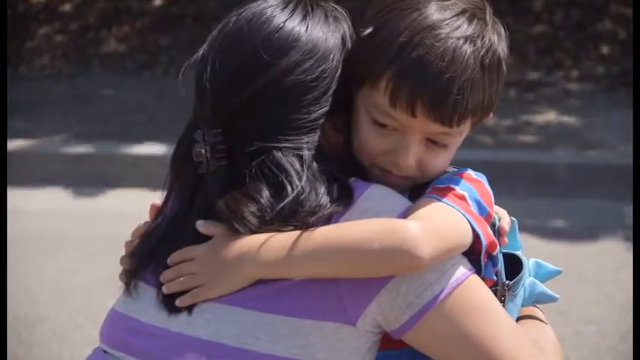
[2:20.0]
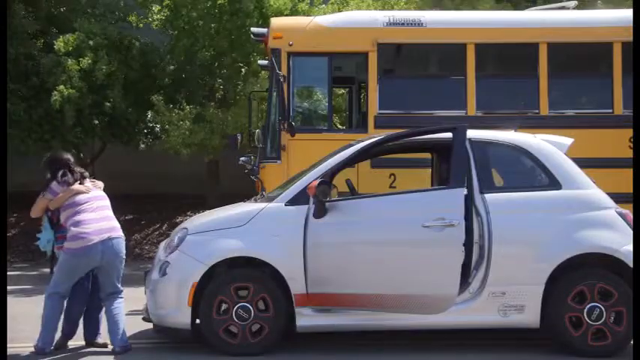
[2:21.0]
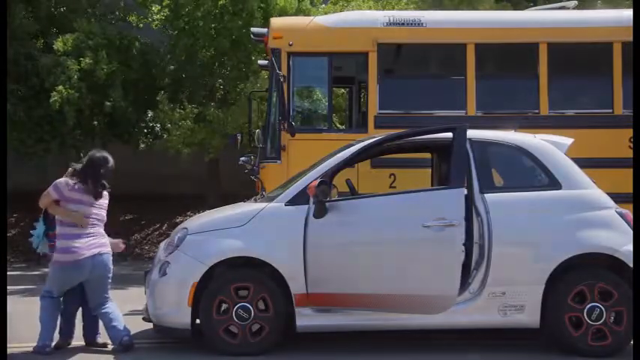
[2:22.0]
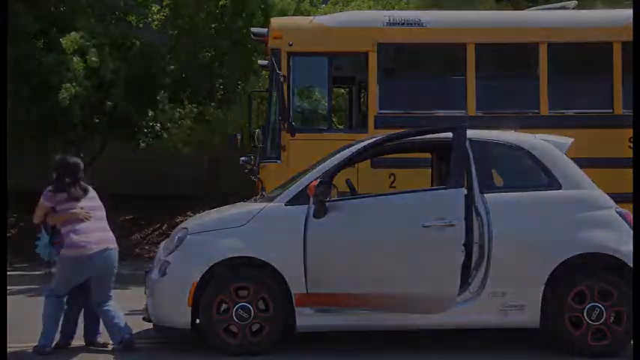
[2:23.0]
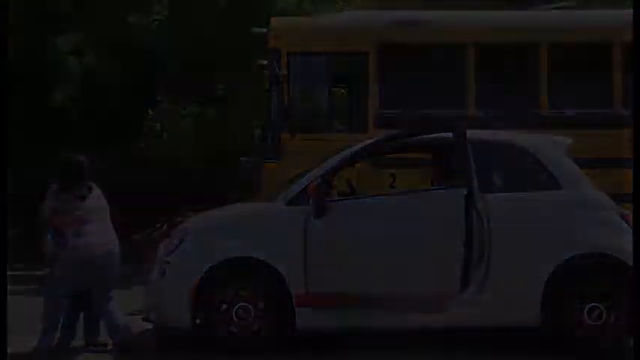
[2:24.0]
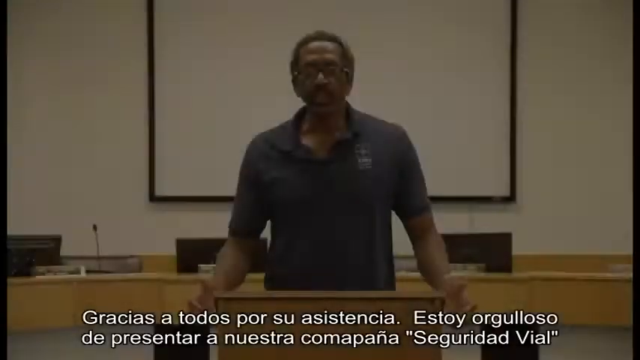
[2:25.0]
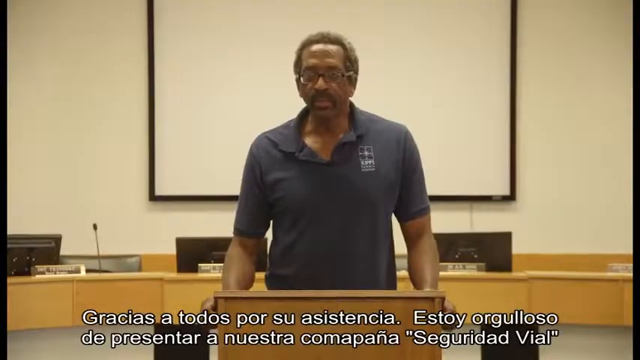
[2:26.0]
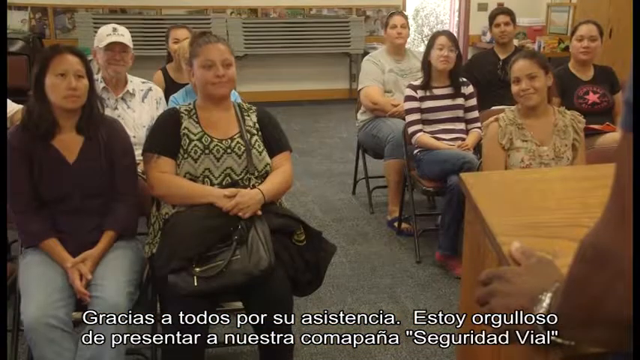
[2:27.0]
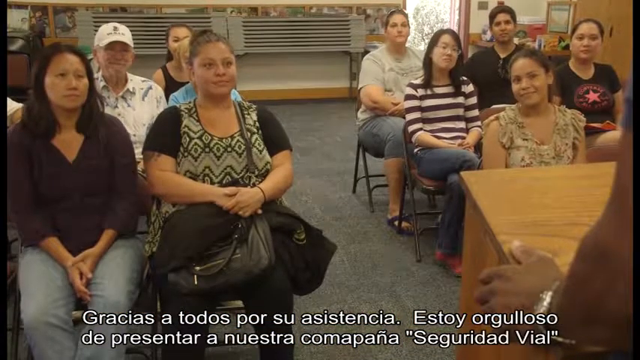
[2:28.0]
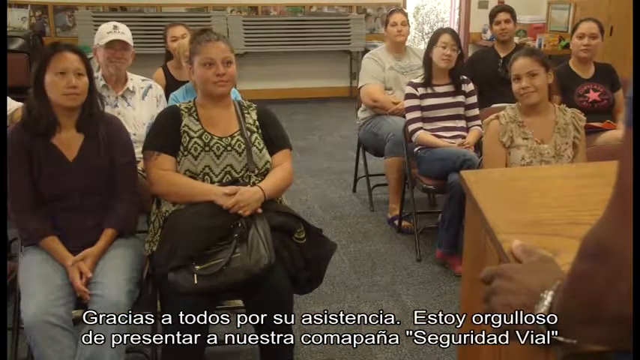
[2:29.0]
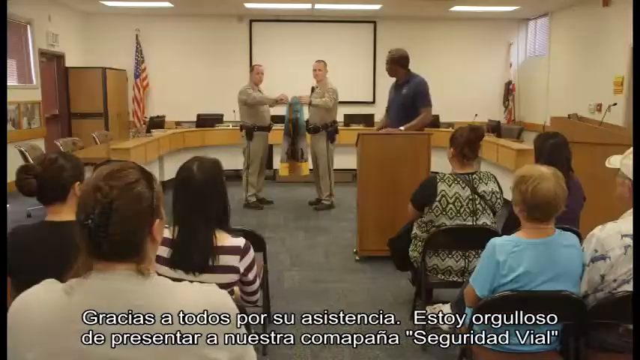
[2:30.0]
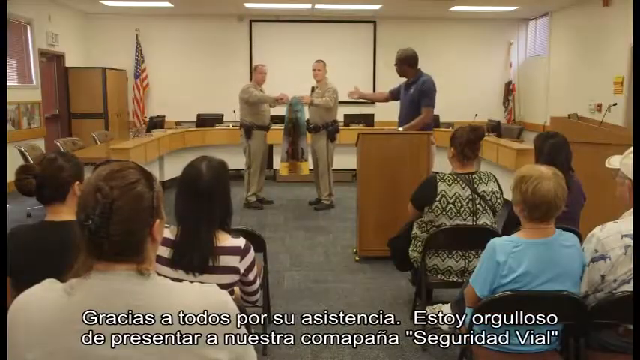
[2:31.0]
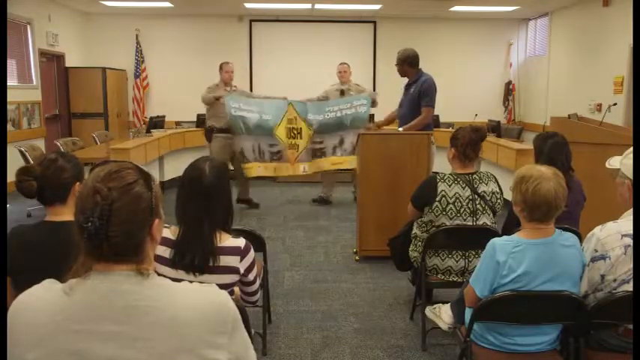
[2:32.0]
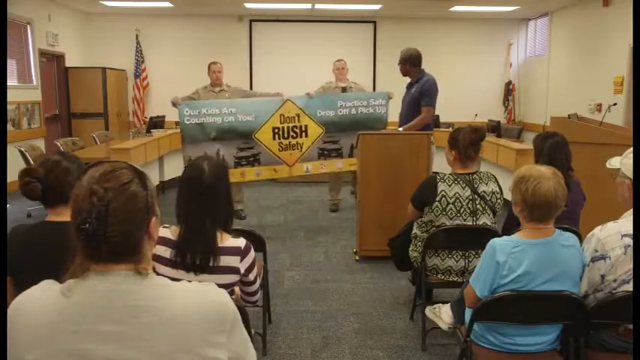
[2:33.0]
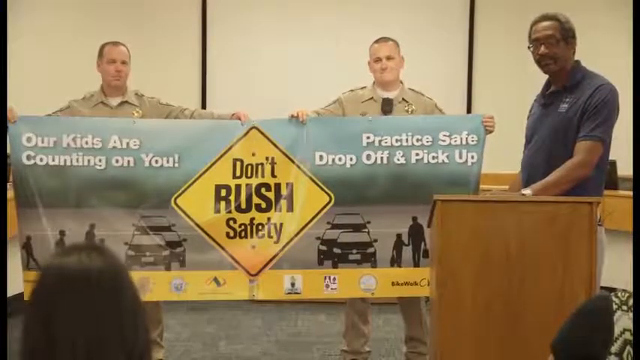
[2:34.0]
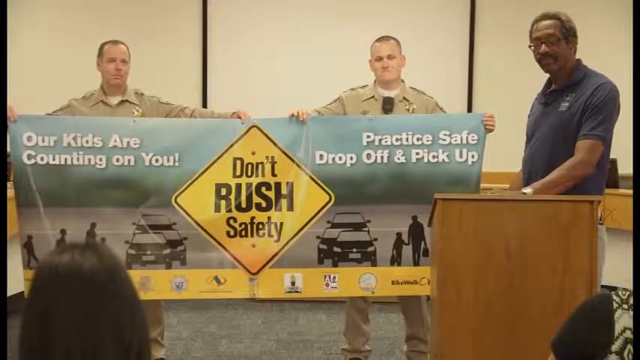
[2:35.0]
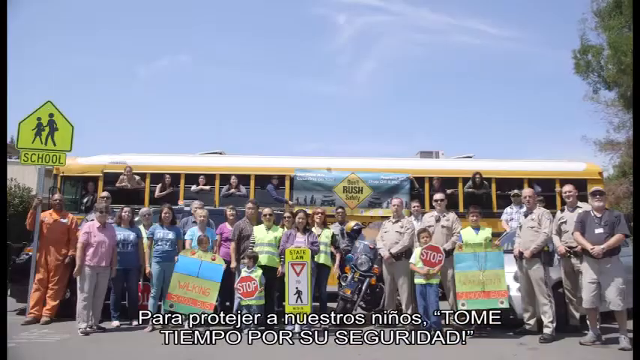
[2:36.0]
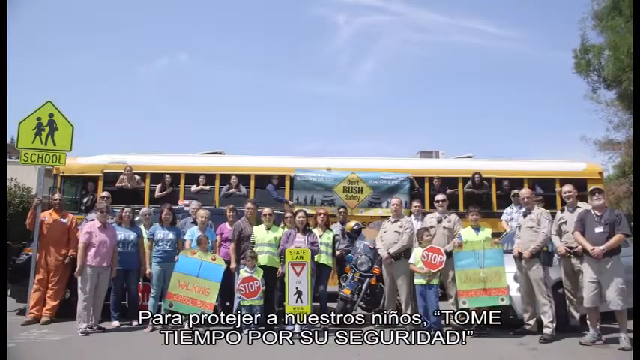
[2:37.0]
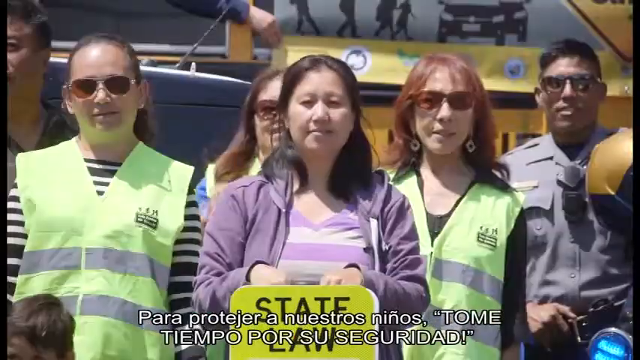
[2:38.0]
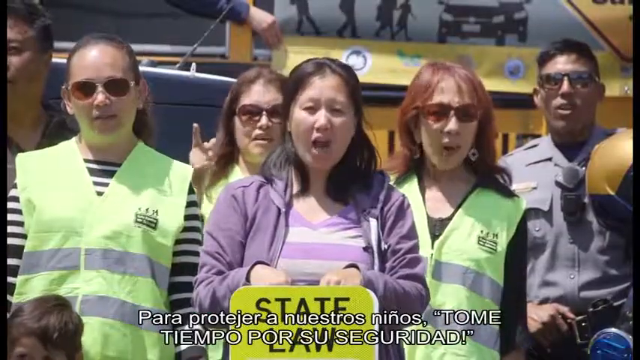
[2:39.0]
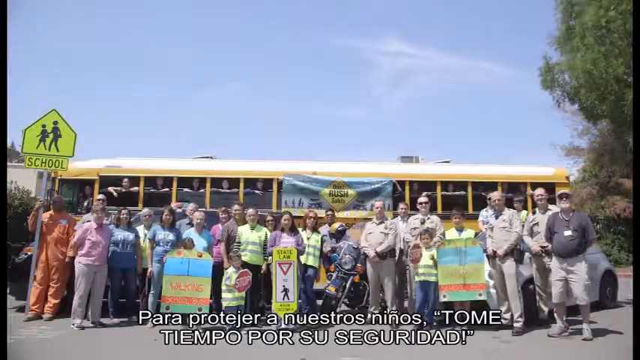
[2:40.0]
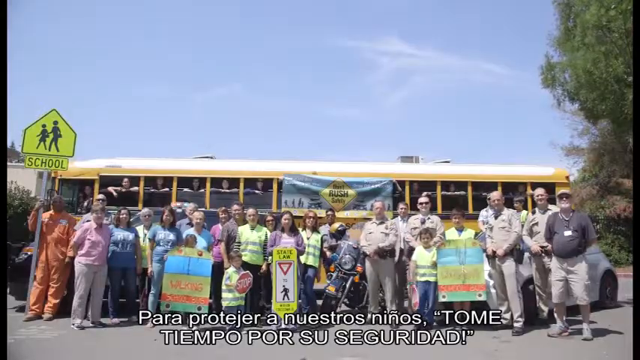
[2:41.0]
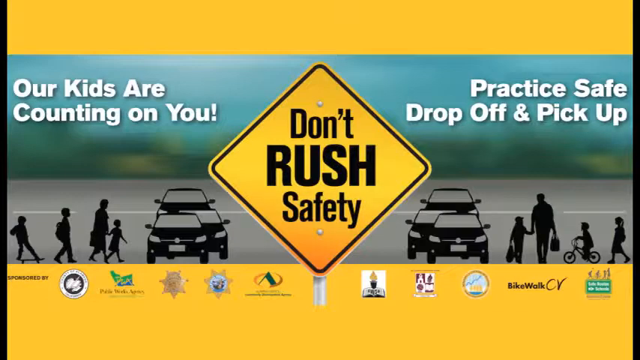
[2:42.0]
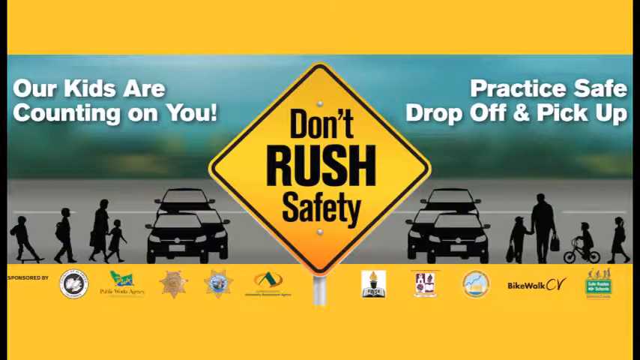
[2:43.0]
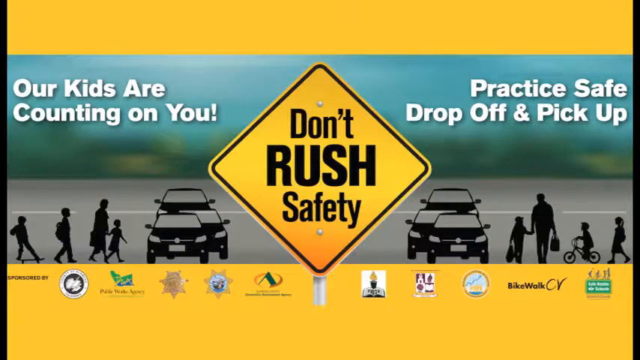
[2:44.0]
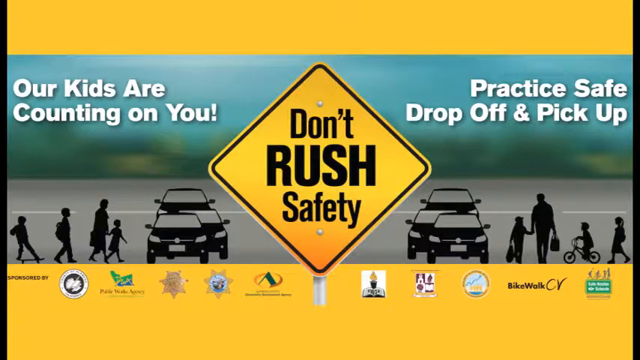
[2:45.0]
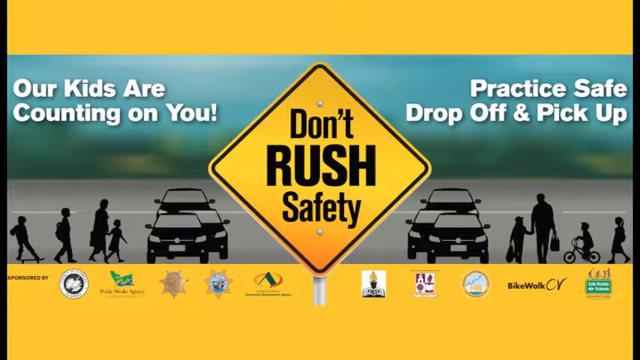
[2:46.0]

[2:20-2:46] The video returns to the adults in the meeting, which appears to be about road safety, especially concerning children. The gentleman stands by the podium speaking to the seated people, and behind him two officers open up a sign that says "our kids are counting on you. Don't rush safety." along with a line beginning "Practice safe" that mentions pick up. The video then transitions to community members holding up signs indicating that there is a school nearby. Children hold up stop signs. A big yellow bus with children and adults in it is behind these people, and a "don't rush safety" sign hangs on the bus. The video ends with a design of the "don't rush safety" sign and message.